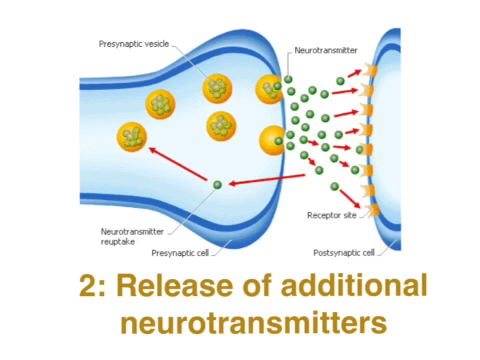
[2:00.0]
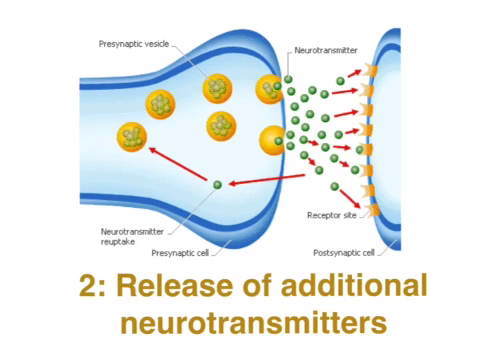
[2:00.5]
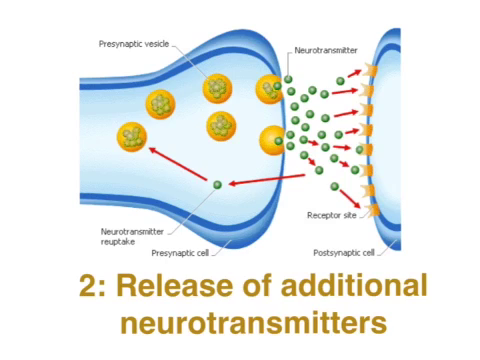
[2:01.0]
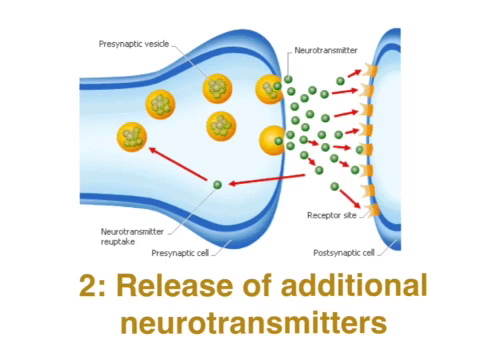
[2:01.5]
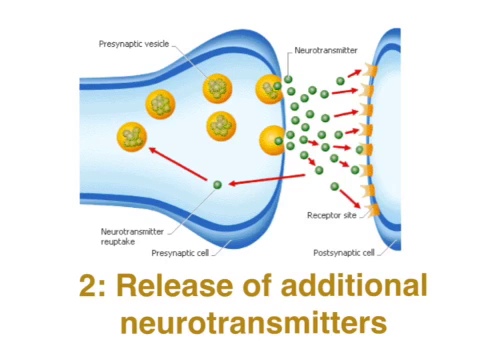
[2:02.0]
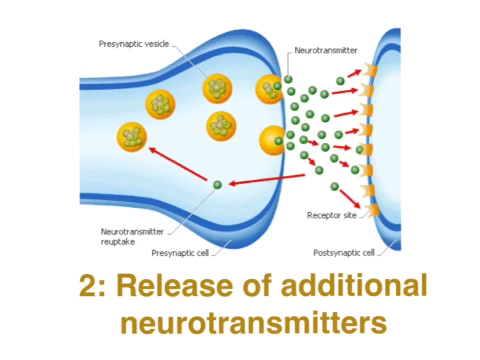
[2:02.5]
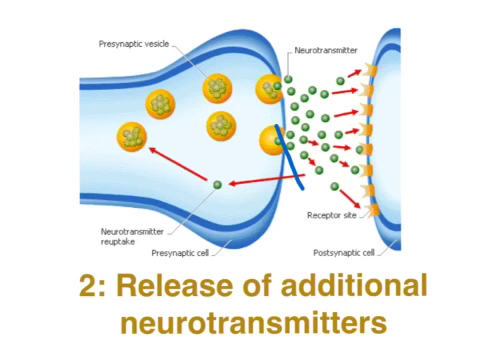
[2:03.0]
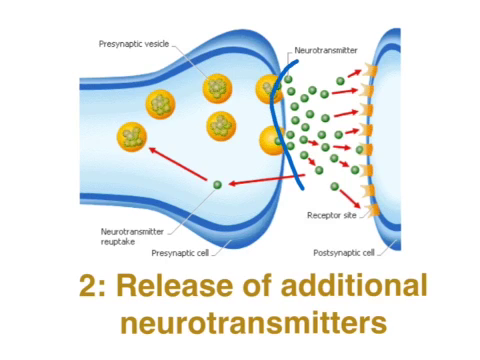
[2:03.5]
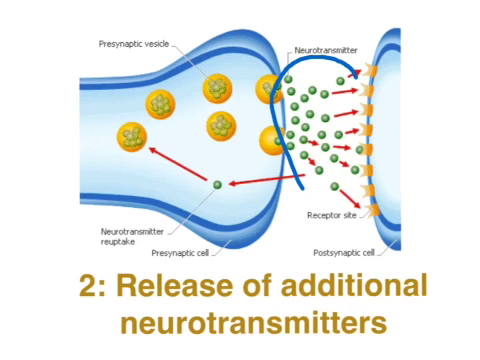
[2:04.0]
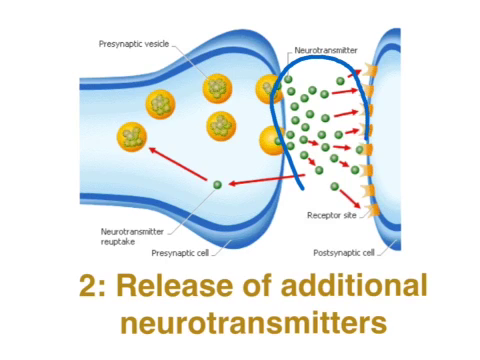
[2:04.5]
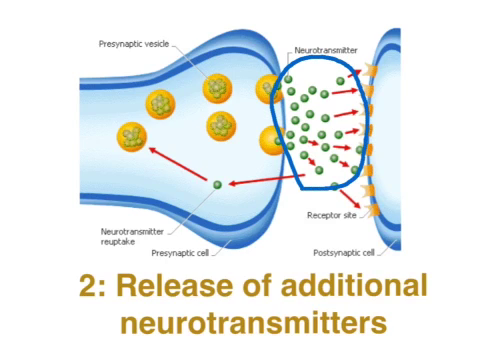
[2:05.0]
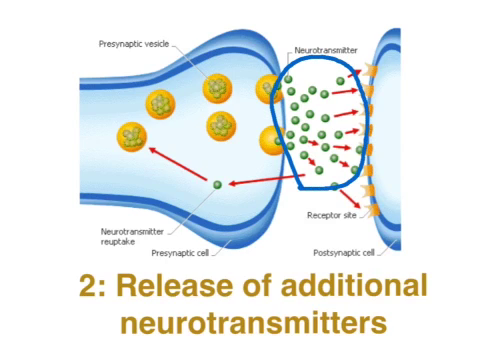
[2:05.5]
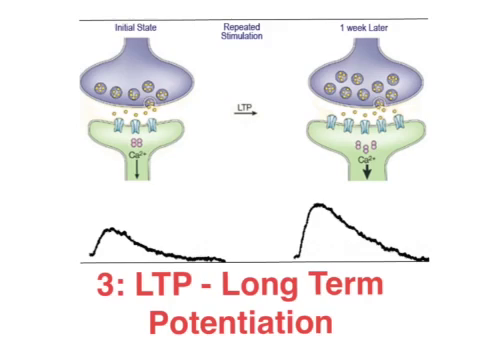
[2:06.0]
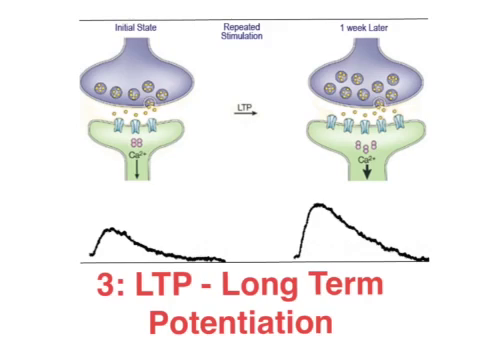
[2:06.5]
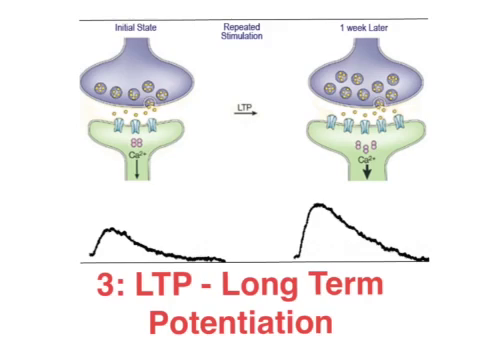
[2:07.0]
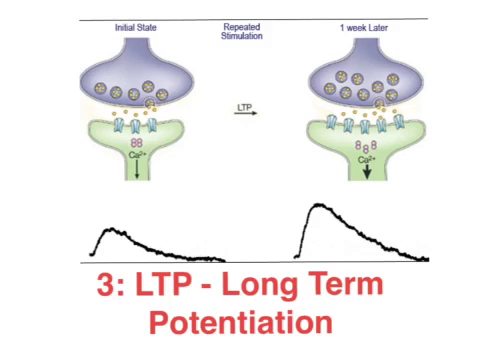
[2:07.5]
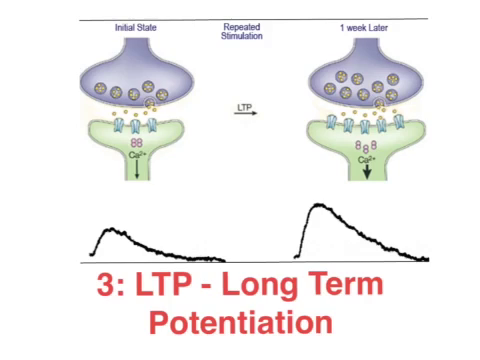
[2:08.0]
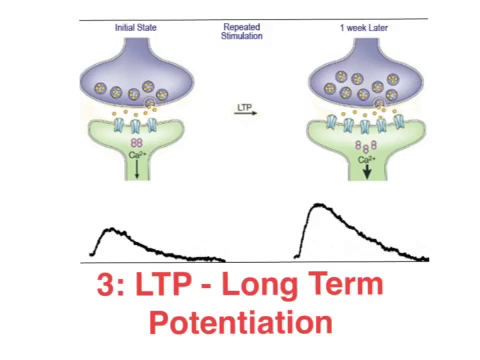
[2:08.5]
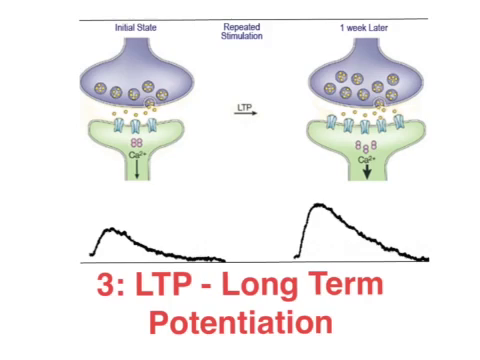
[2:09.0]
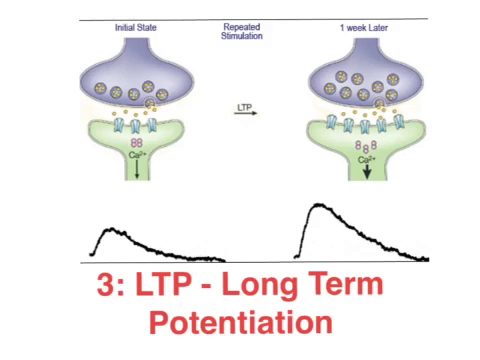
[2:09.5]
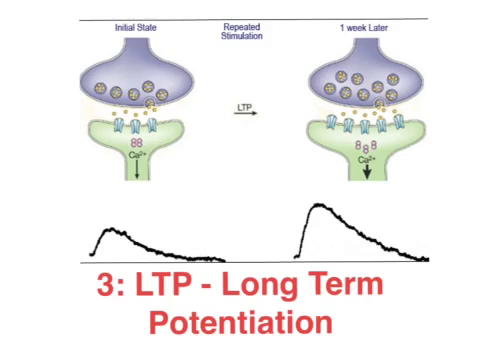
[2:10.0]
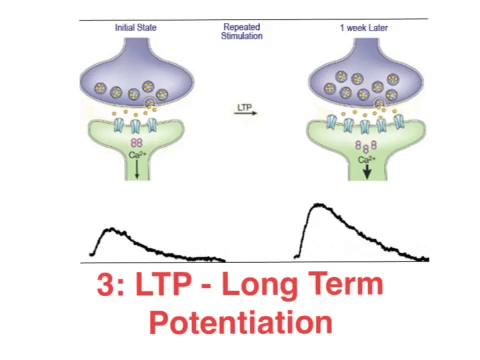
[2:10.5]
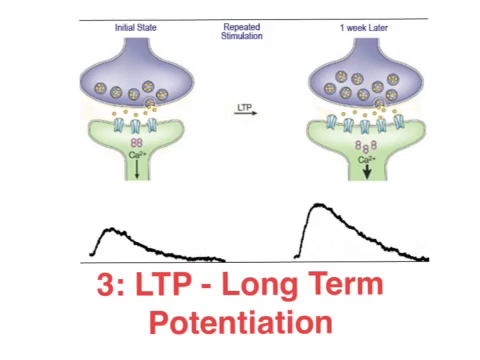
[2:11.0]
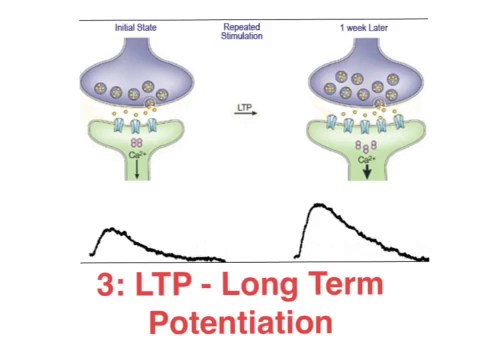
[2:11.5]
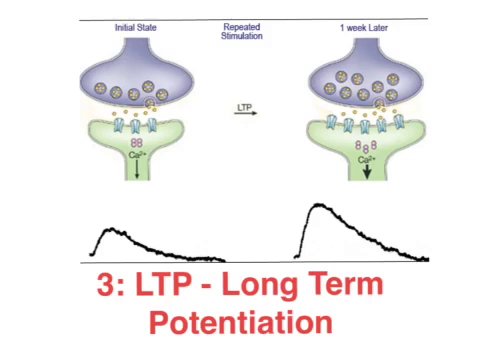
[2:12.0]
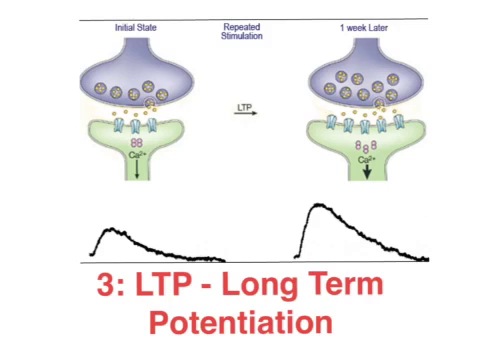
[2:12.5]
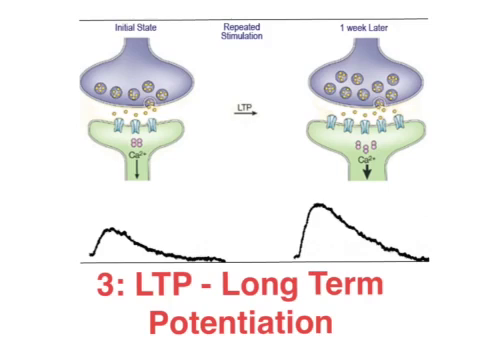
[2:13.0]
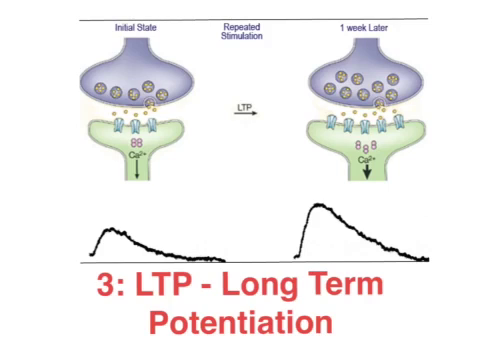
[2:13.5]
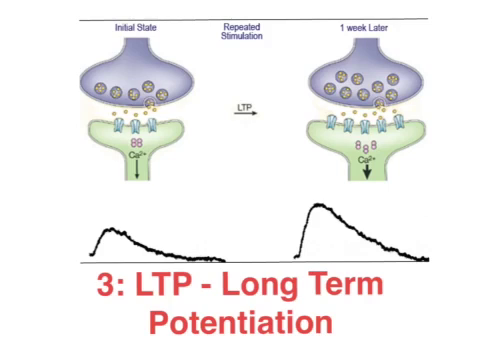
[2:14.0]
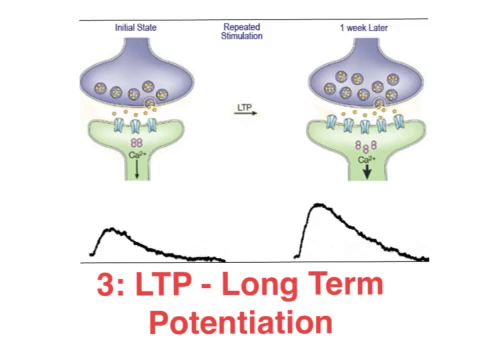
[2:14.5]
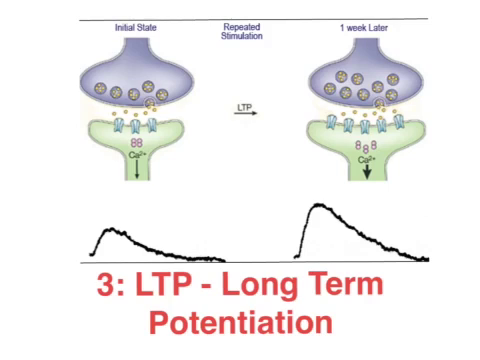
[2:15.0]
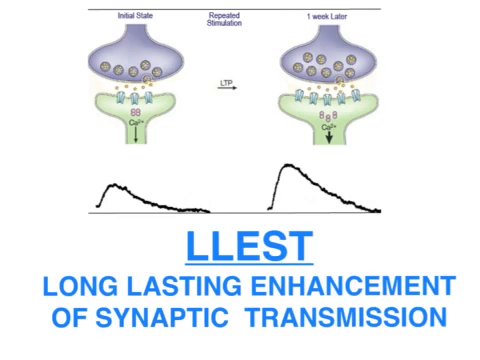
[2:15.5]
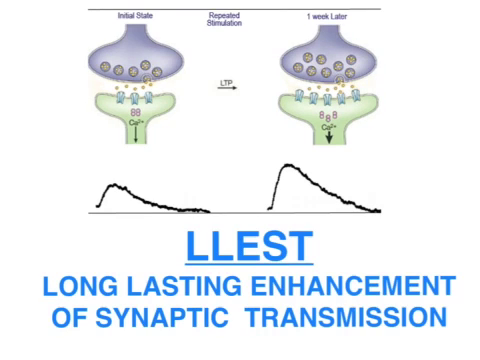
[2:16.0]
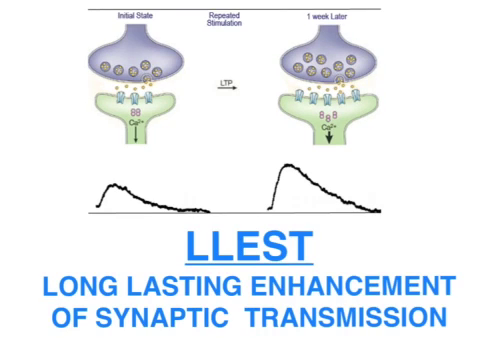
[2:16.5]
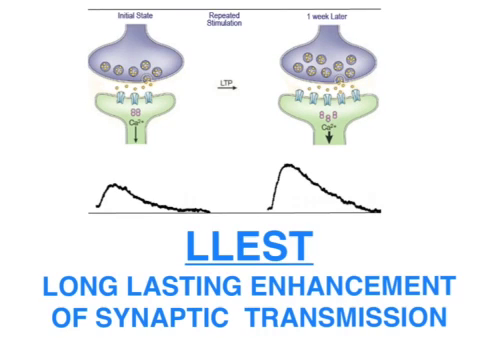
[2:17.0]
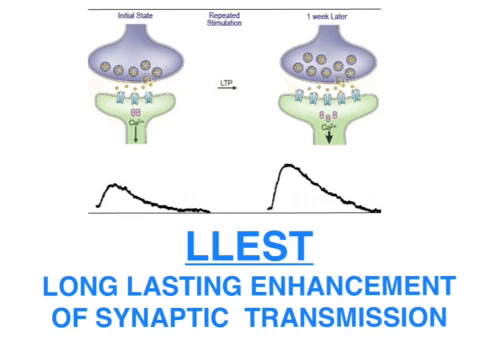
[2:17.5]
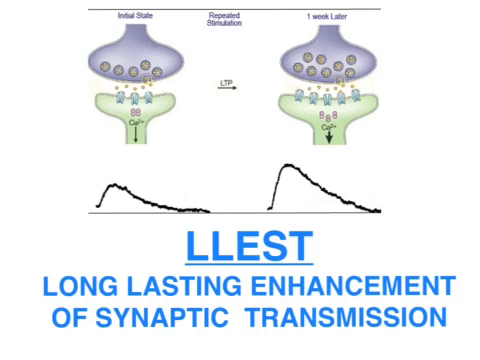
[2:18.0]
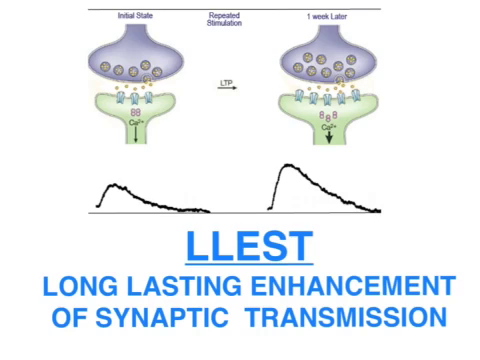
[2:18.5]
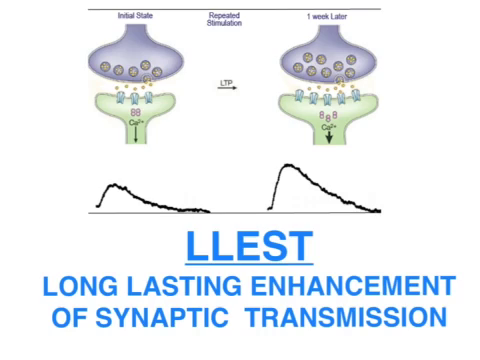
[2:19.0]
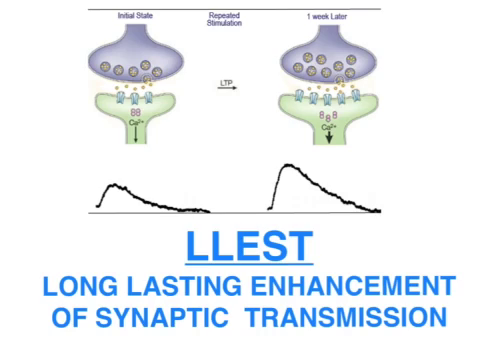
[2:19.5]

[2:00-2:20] The blue butternut-squash-shaped object lies on its side, facing the partial view of a round, flat blue object on the right side of the screen. The larger object on the left has six yellow circles within it, each containing several green circles. Numerous green circles float in the space between the two objects, near red arrows indicating motion from left to right. A group of yellow splashes appears on the blue surface on the right, indicating landing. The top says "presynaptic vesicle," "neurotransmitter" is in the middle, and the bottom says "neurotransmitter reuptake," "presynaptic cell," "receptor site" and "postsynaptic cell." A blue pen outlines the green dots between the two objects. The video then changes to another illustration. On the left are two bulbous objects: the top one is gray and the one underneath is green, appearing to be curved to accept the top shape. The same two shapes appear on the right. Underneath, the text reads "3, LTP, long-term potential." The left is labeled "initial state," the center says "repeated stimulation," and "one week later" is written on the right. Between the two, above an arrow pointing right, are the letters "LTP." The screen changes again, and below the same two bulbous objects is the text "LLEST Long lasting enhancement of synaptic transmission."